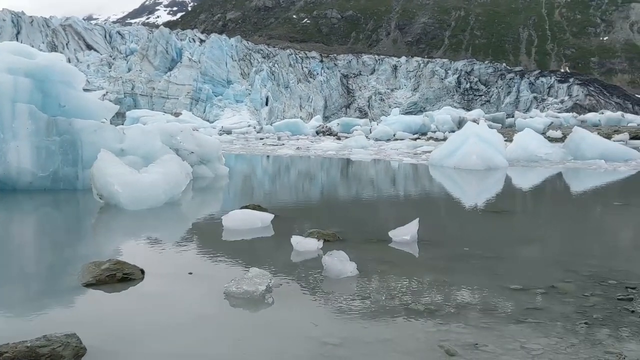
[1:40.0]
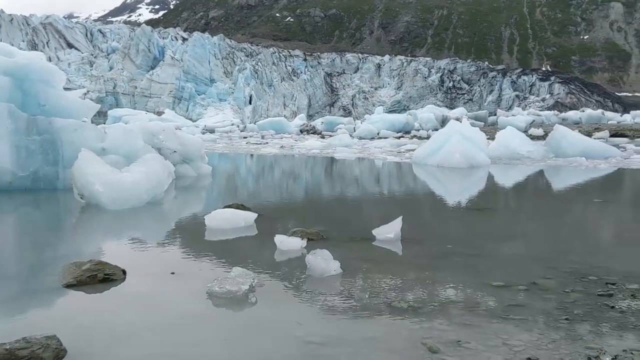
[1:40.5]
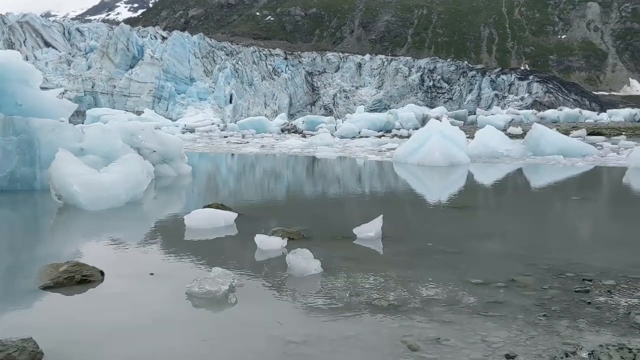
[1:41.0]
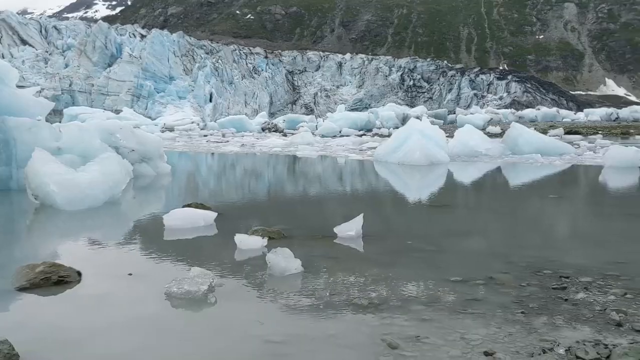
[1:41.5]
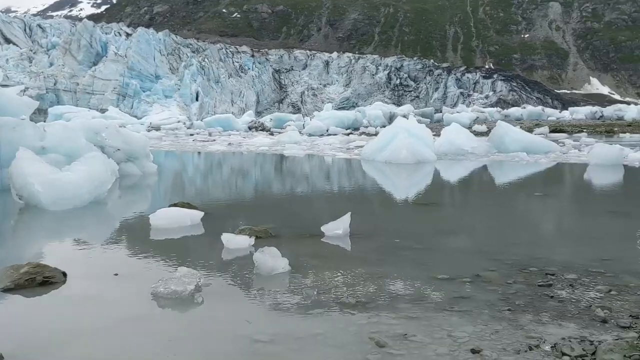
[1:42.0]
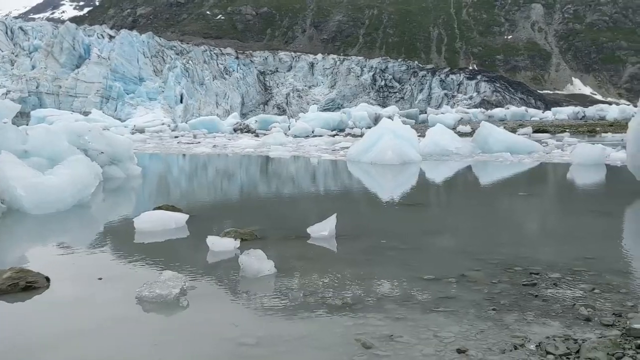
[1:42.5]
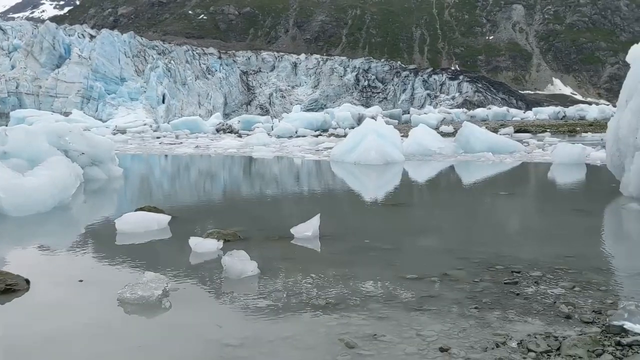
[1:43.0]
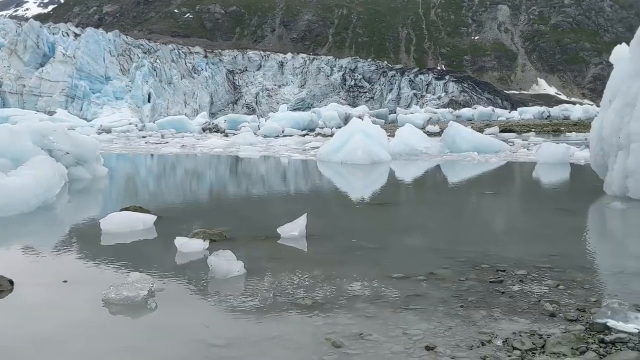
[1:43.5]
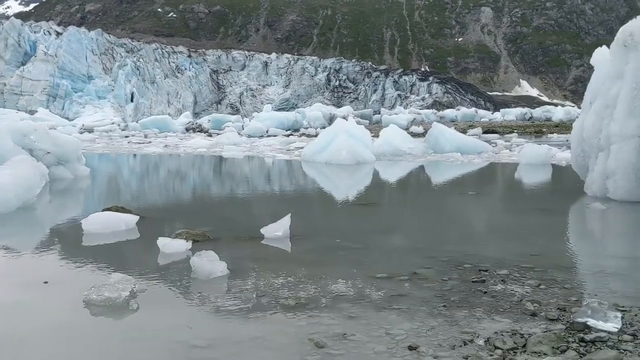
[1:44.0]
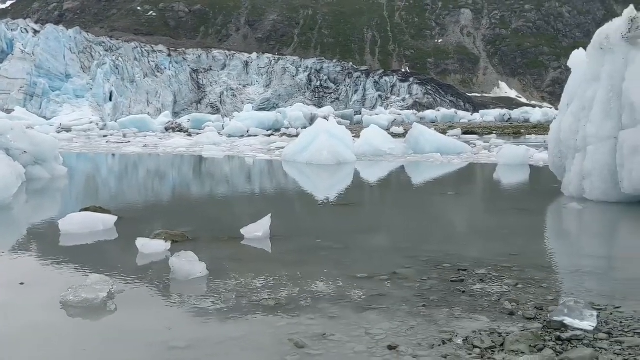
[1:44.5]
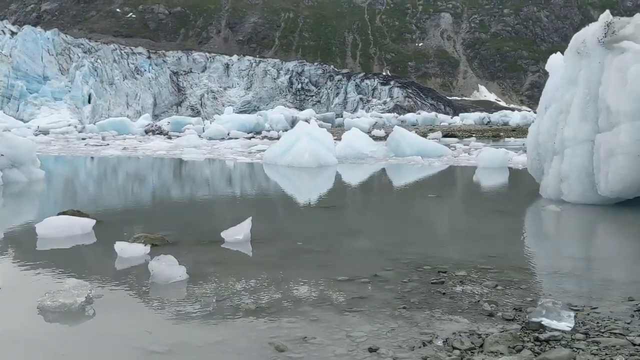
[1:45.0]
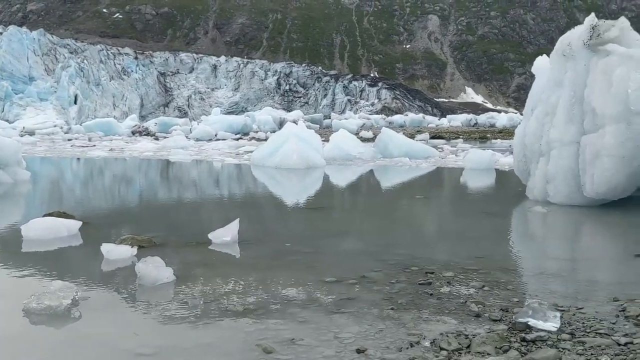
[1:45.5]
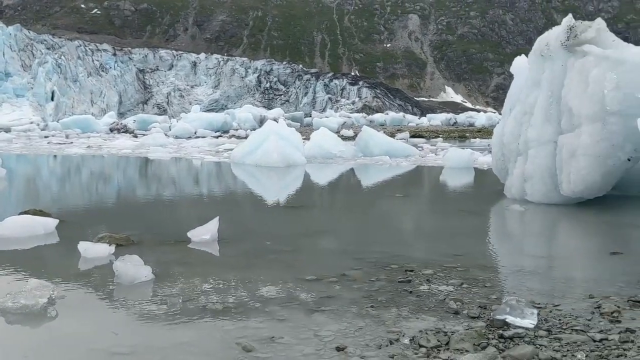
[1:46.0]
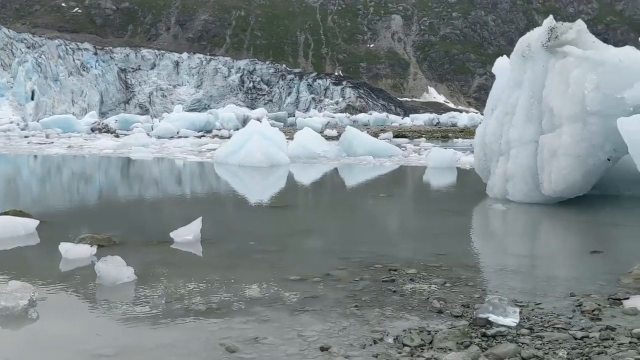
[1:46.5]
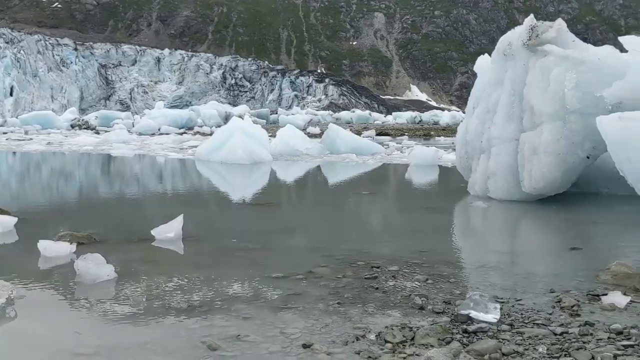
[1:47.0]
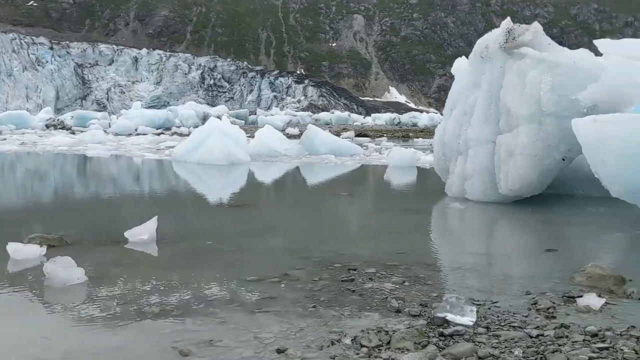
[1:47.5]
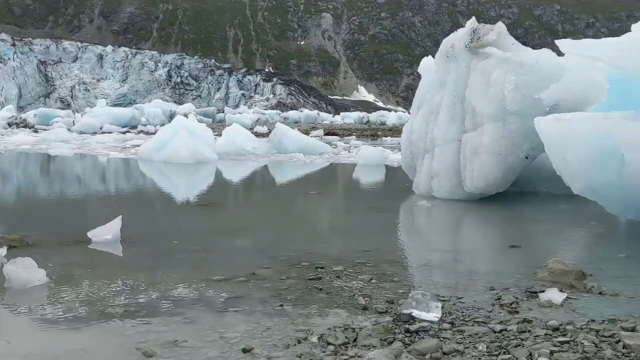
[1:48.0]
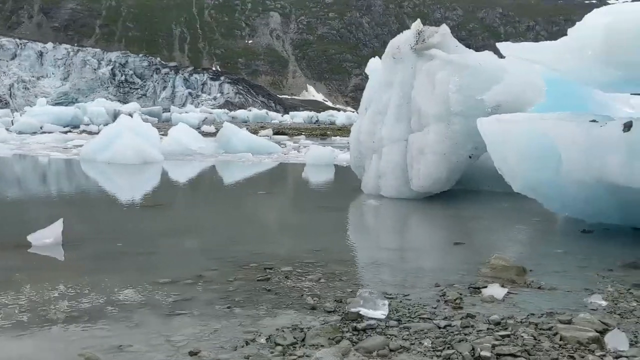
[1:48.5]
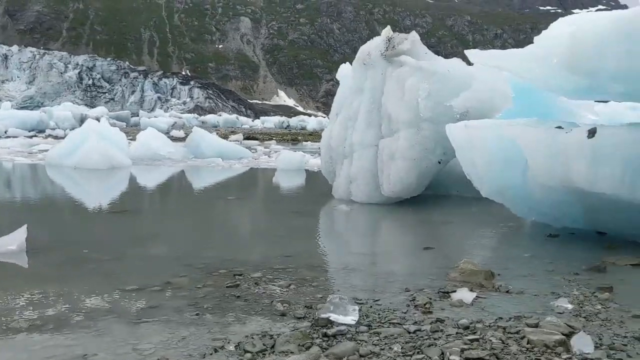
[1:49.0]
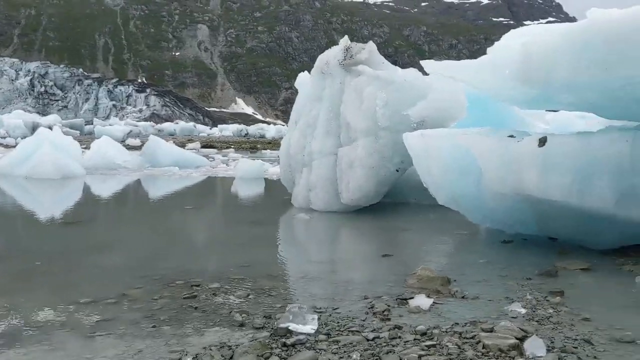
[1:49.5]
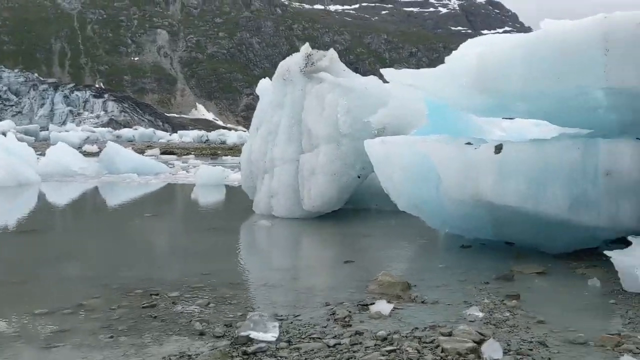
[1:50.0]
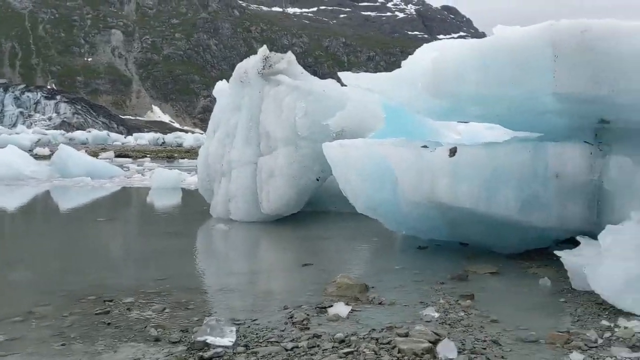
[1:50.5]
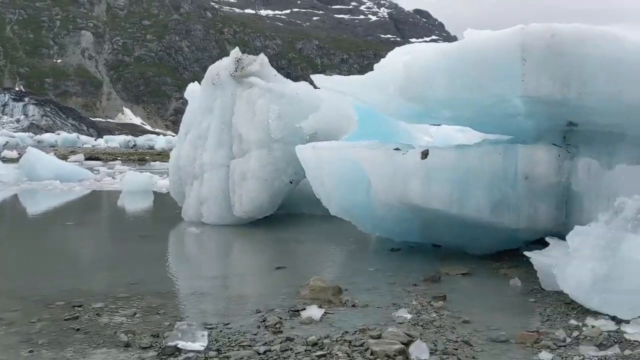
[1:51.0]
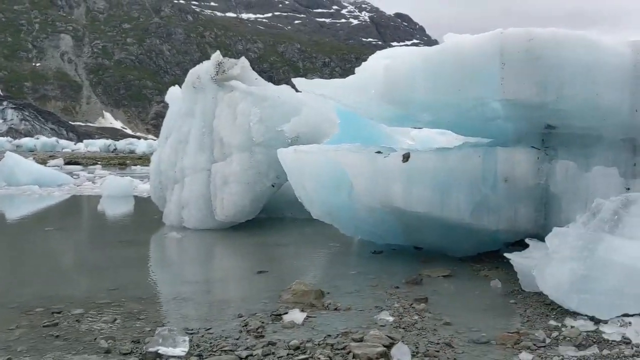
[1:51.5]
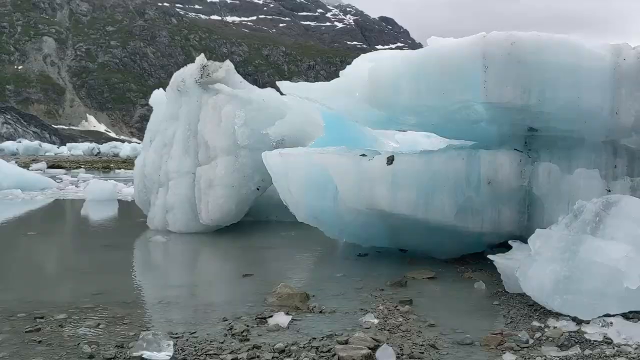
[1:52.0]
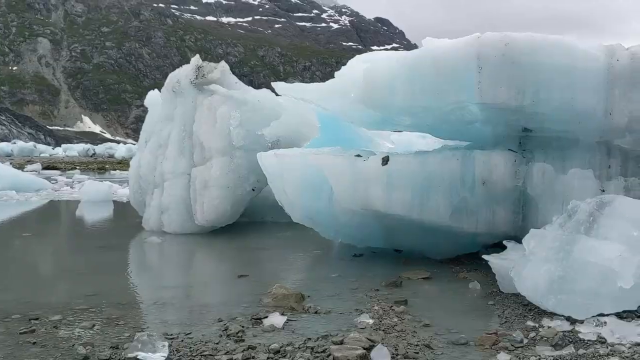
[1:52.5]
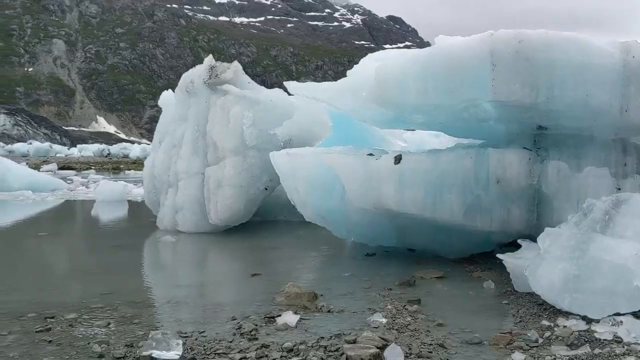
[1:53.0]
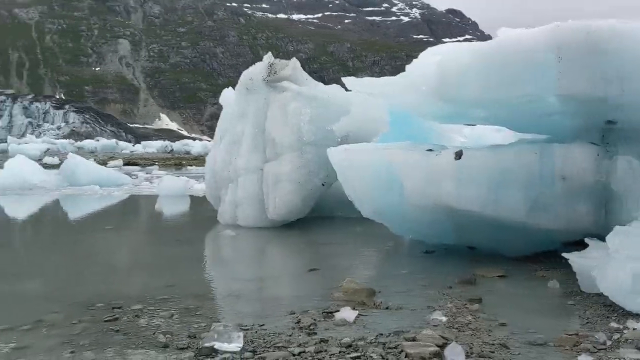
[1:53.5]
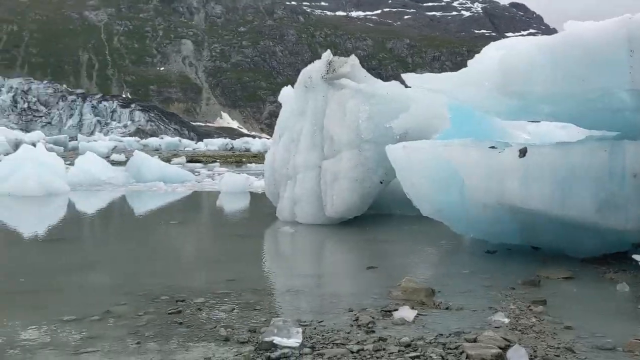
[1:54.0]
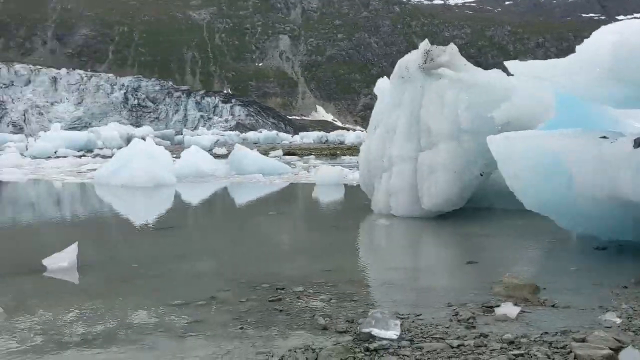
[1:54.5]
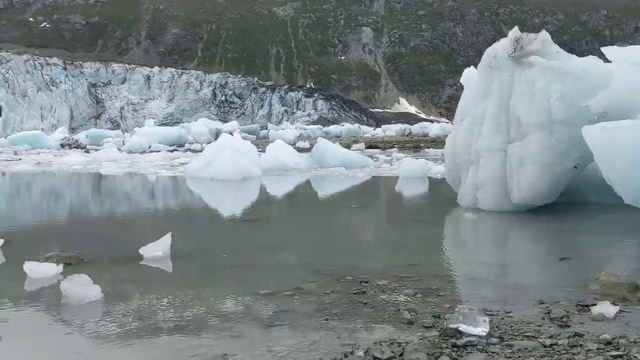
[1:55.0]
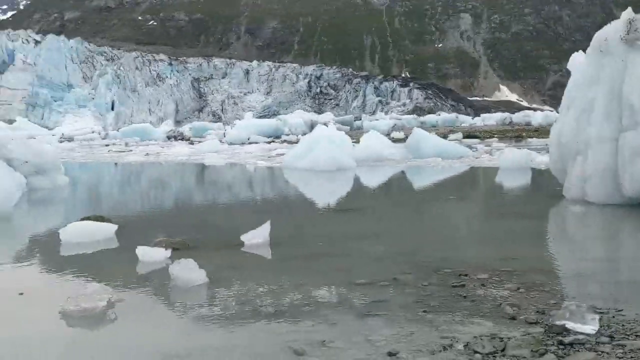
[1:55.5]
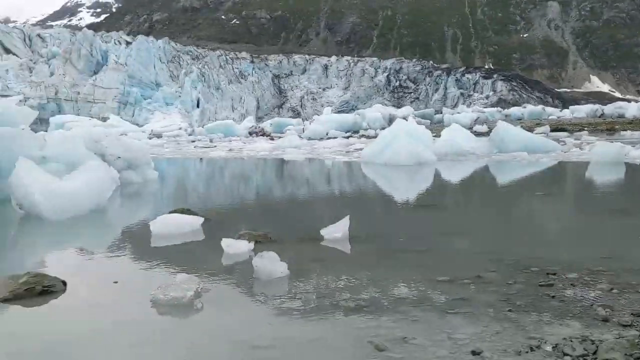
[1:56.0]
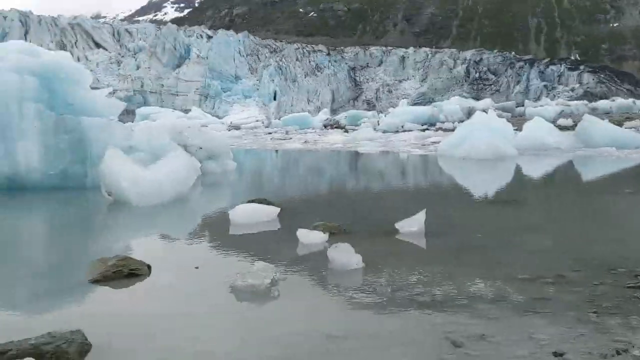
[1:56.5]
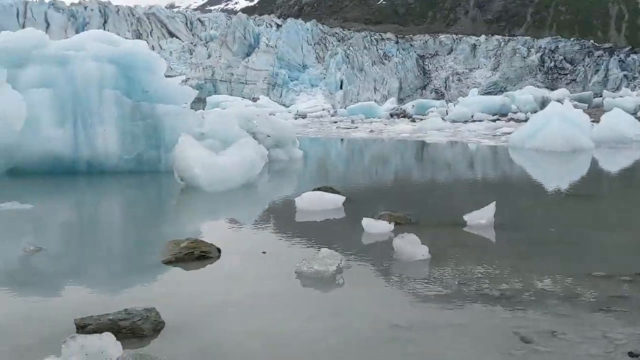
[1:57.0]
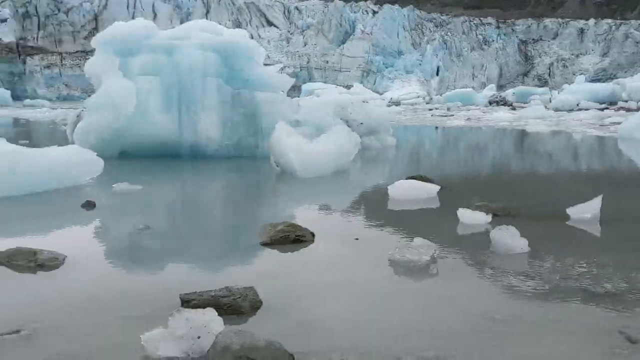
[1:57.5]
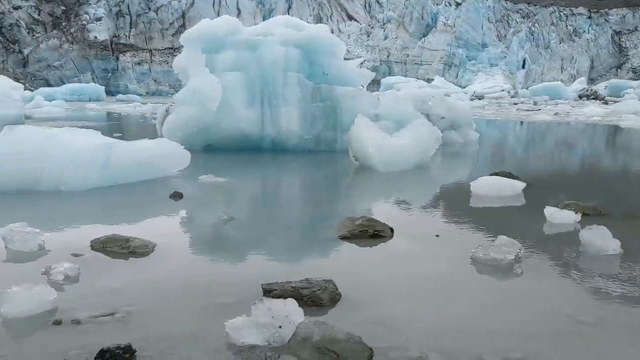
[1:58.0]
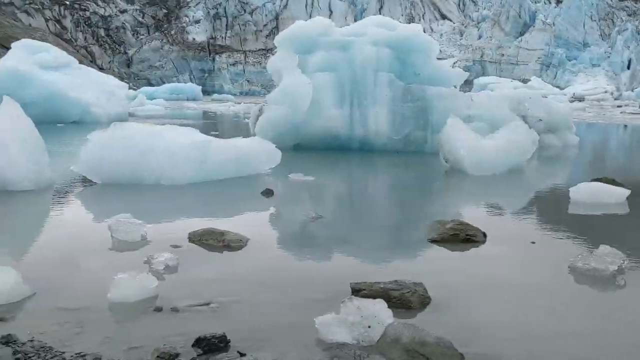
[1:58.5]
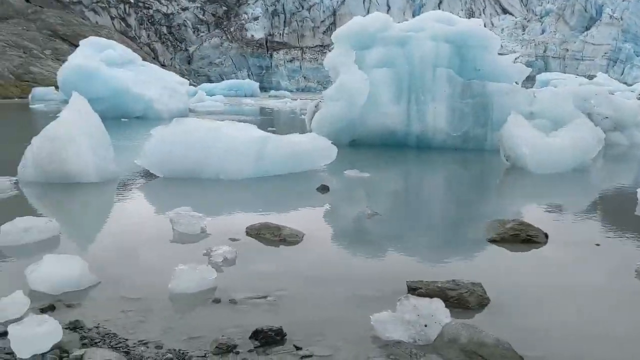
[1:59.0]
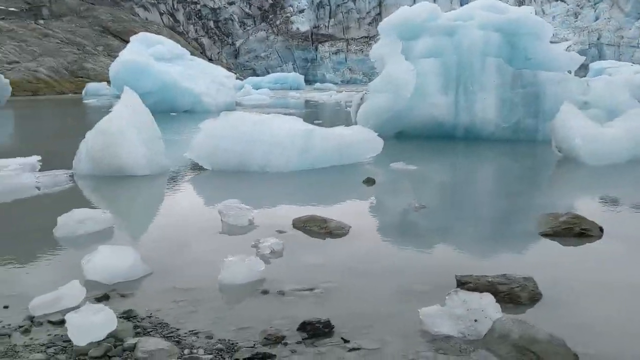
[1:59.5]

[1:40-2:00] The shallow, muddy, silty pool at the end of the glacier holds melted chunks of ice, some very light white in colour and bigger ones that are translucent and blue, along with some little chunks of rock. In the background is a cliff of dirty white, grey and blue, the wall of ice marking the front of the glacier, and behind it the mountains with just a very light mossy coating of green. The camera pans to the right and then to the left across the meltwater and the melting blocks of ice sitting in the meltwater pool at the glacier's furthest extent. The water ripples softly with some light reflections; it is very still, with no wind to speak of and no signs of any animal life in this bleak, desolate place.